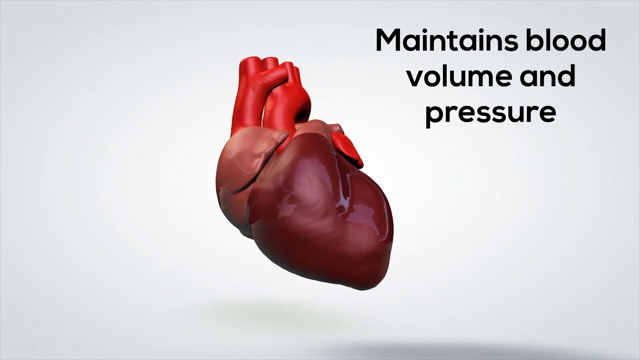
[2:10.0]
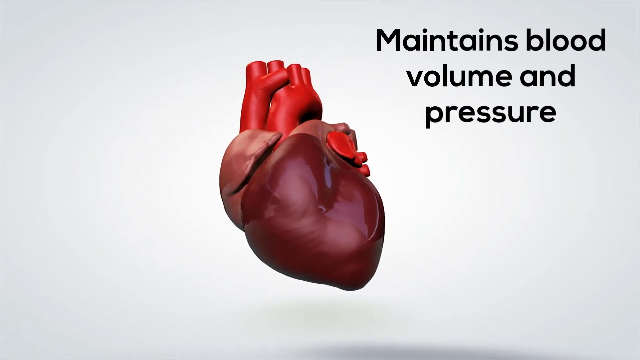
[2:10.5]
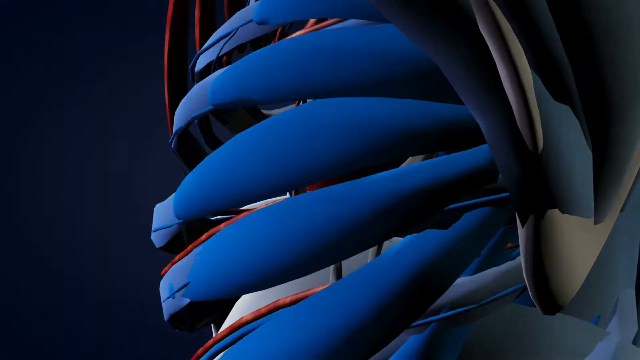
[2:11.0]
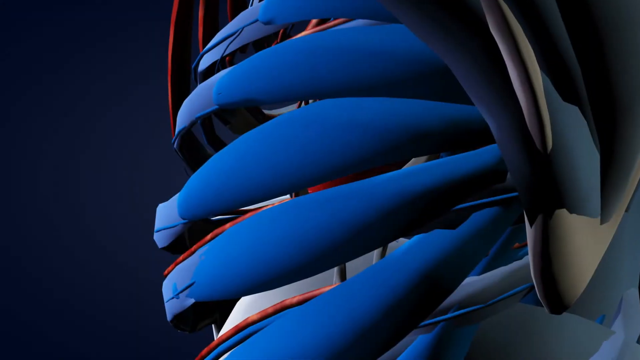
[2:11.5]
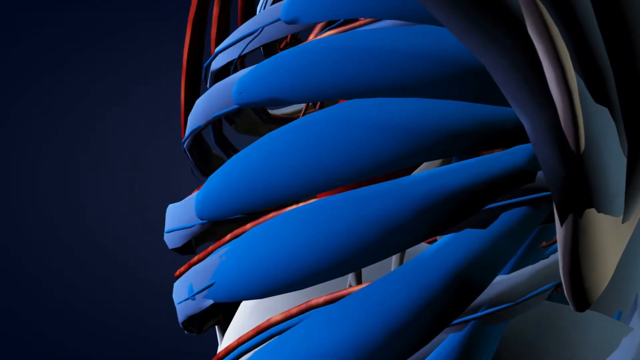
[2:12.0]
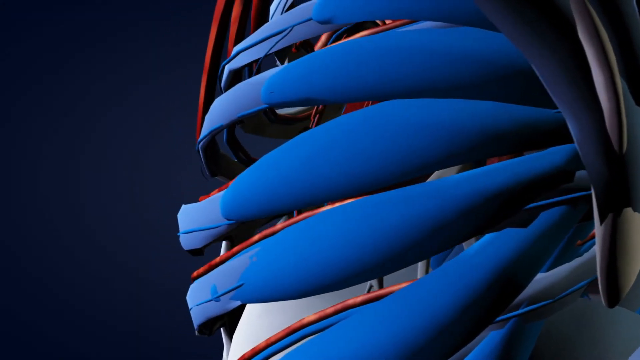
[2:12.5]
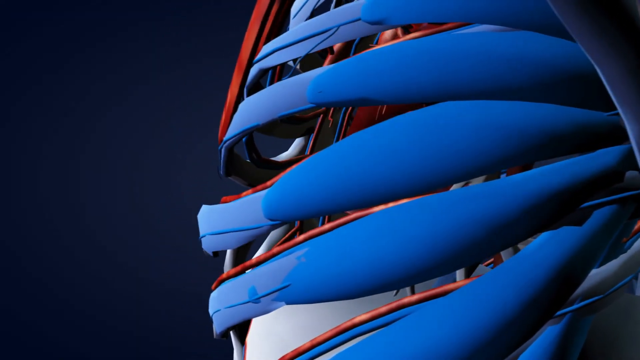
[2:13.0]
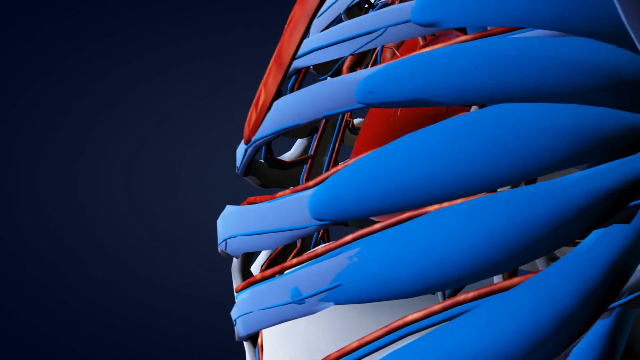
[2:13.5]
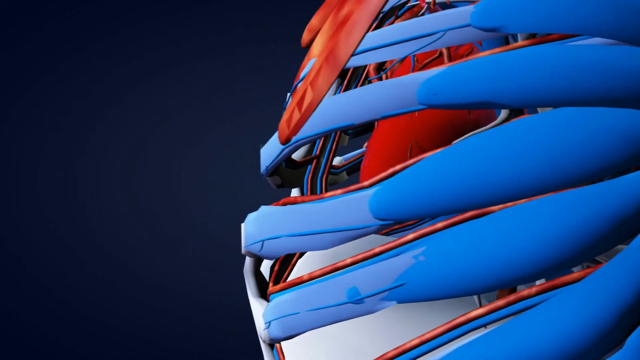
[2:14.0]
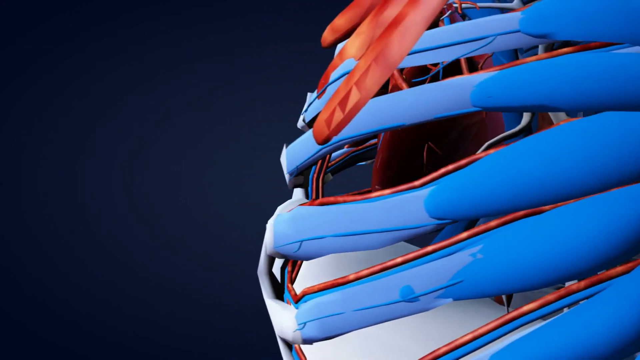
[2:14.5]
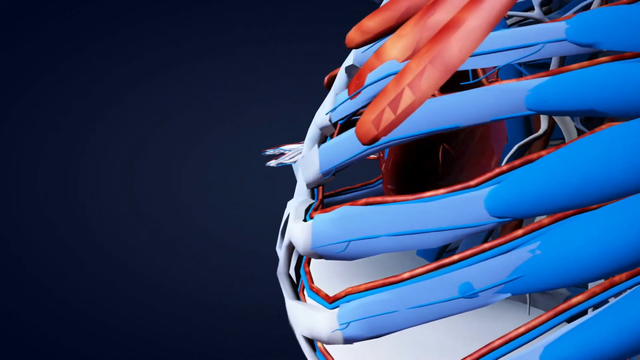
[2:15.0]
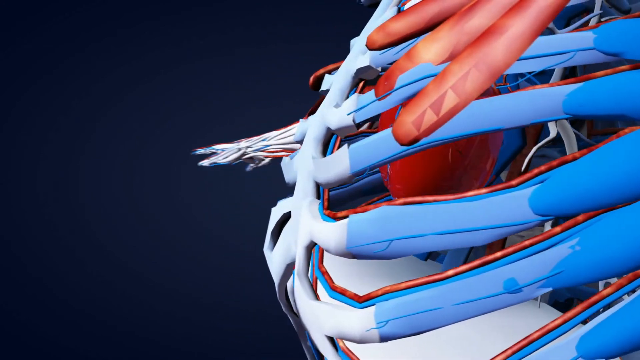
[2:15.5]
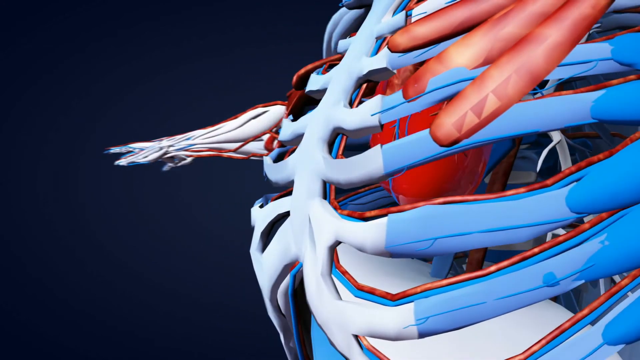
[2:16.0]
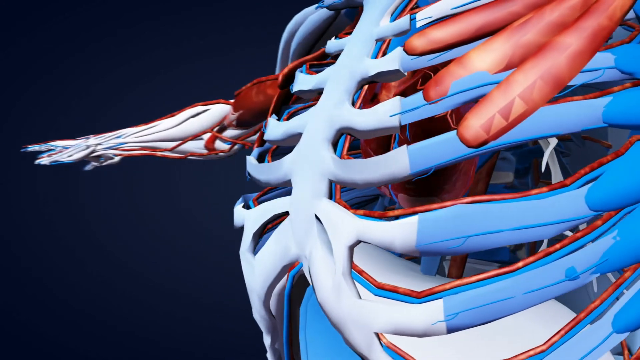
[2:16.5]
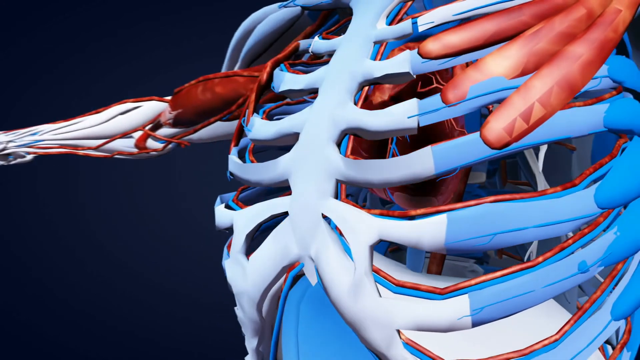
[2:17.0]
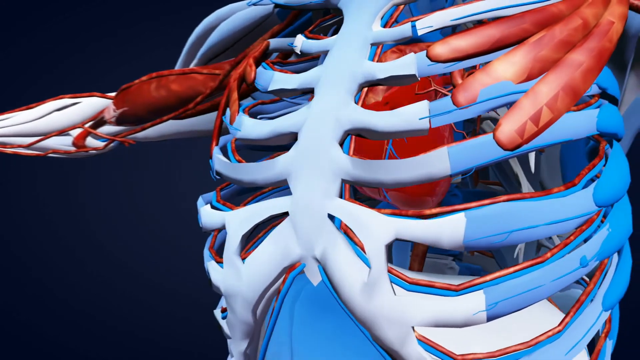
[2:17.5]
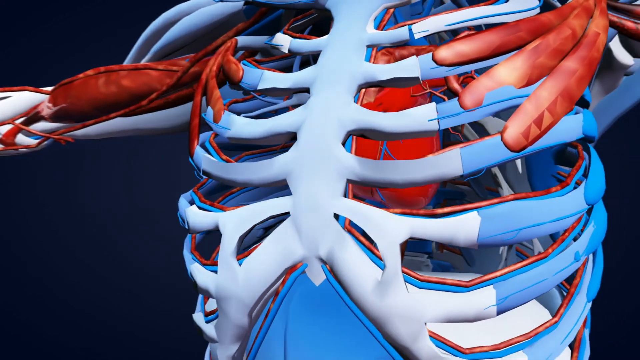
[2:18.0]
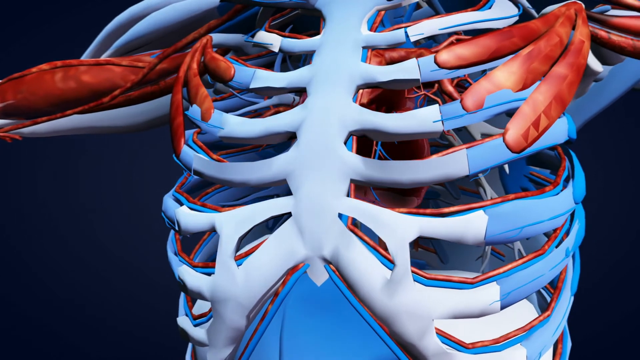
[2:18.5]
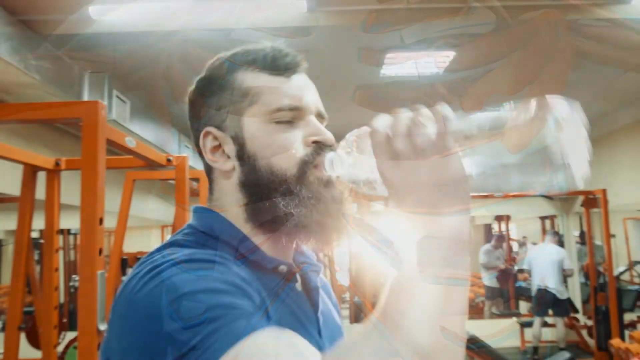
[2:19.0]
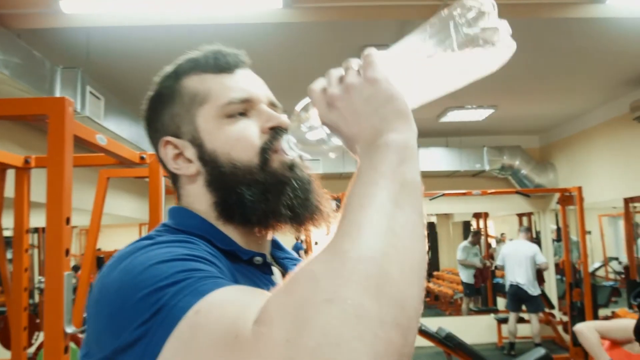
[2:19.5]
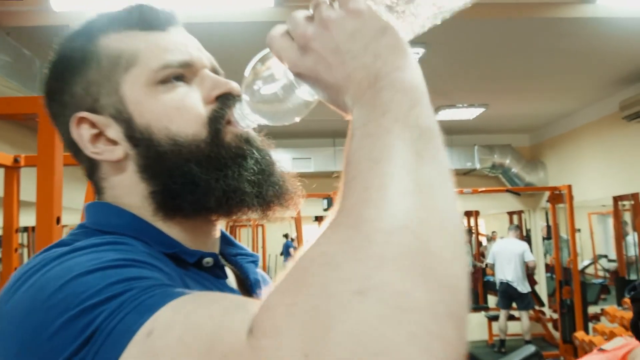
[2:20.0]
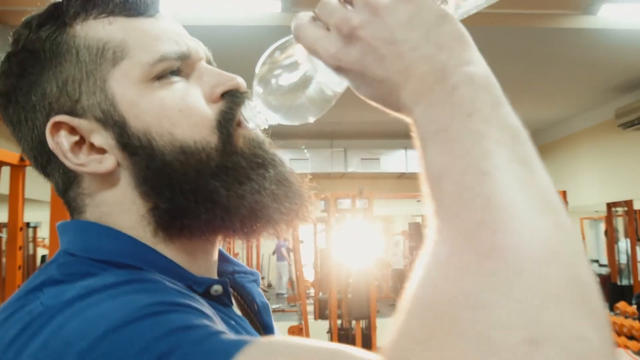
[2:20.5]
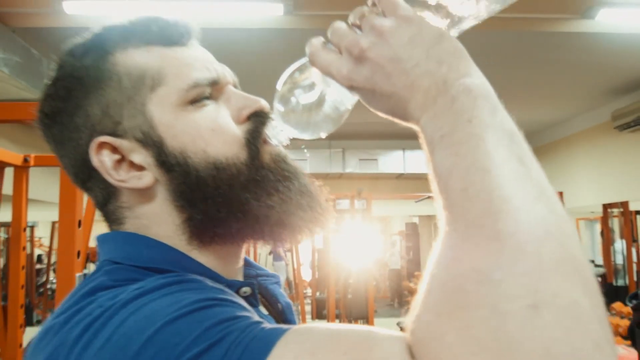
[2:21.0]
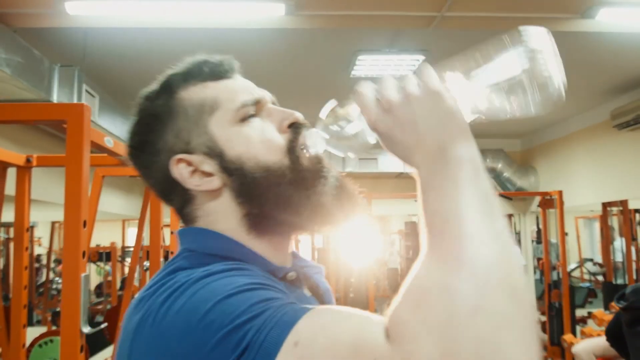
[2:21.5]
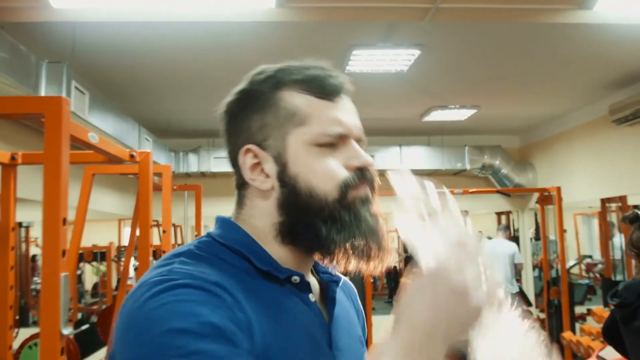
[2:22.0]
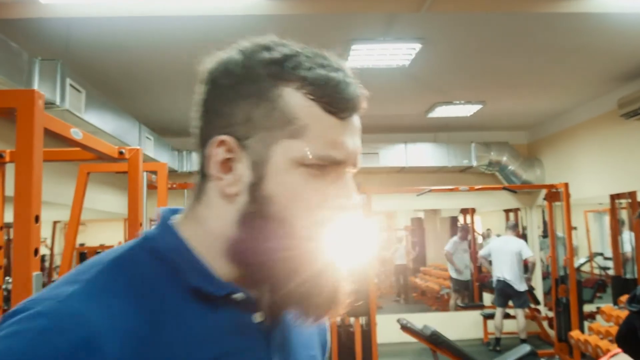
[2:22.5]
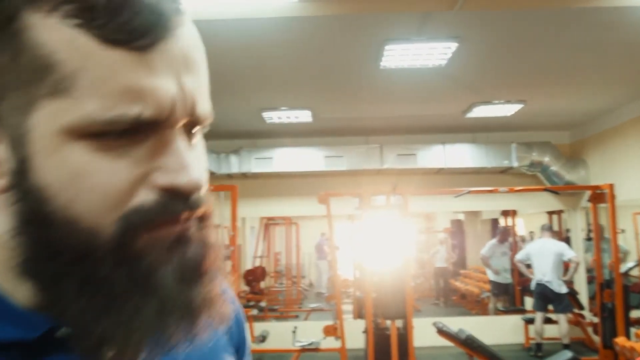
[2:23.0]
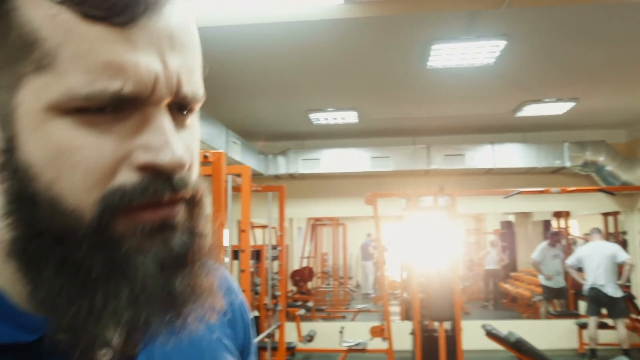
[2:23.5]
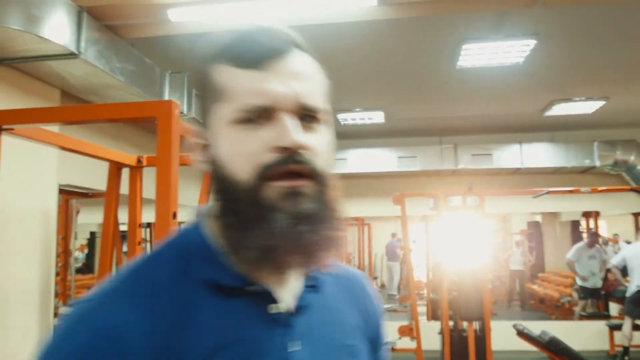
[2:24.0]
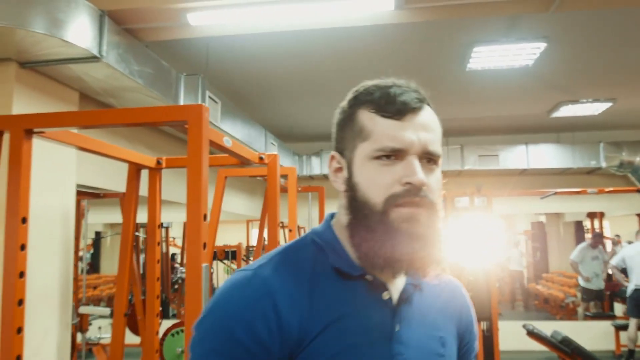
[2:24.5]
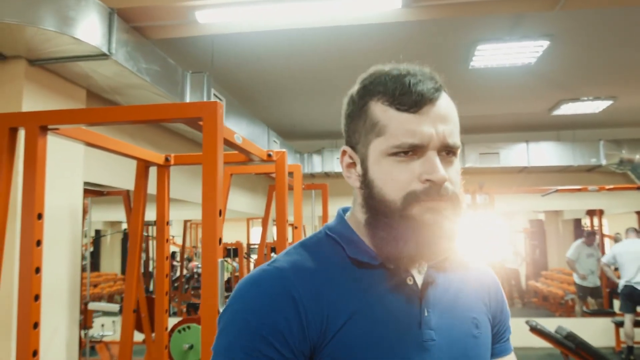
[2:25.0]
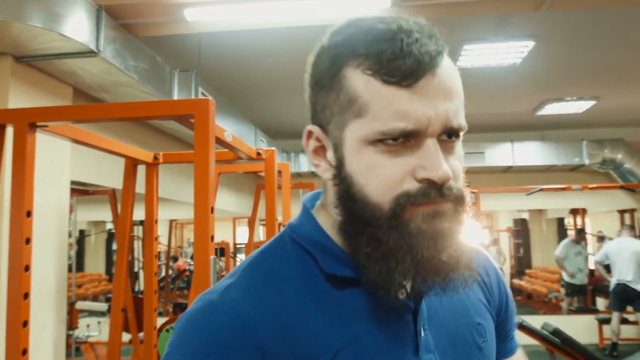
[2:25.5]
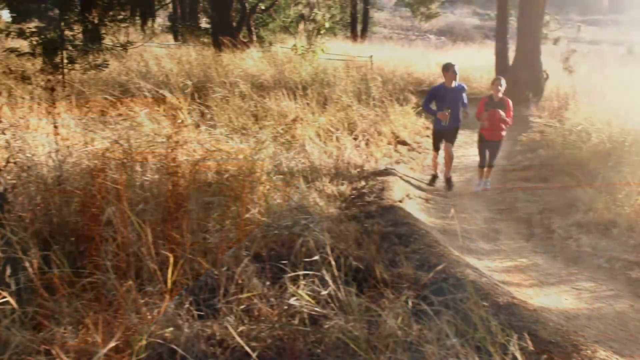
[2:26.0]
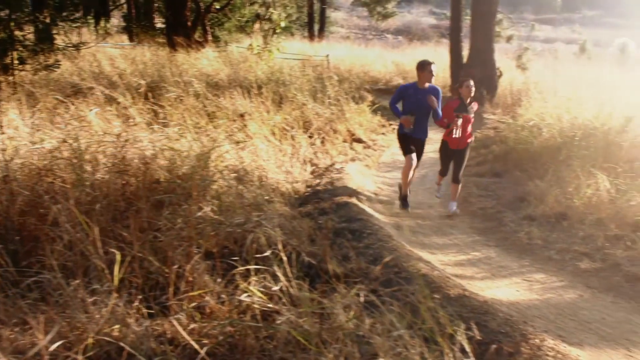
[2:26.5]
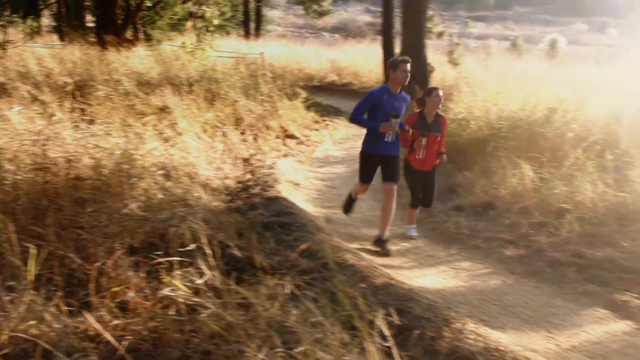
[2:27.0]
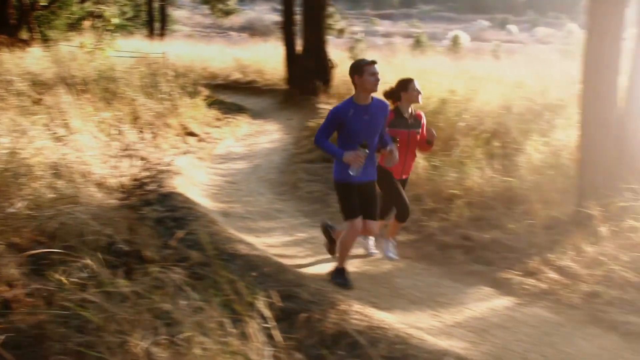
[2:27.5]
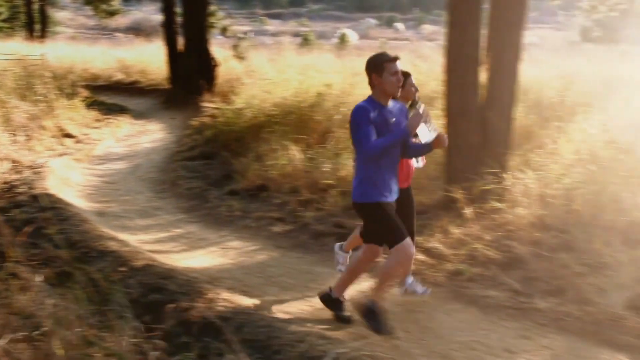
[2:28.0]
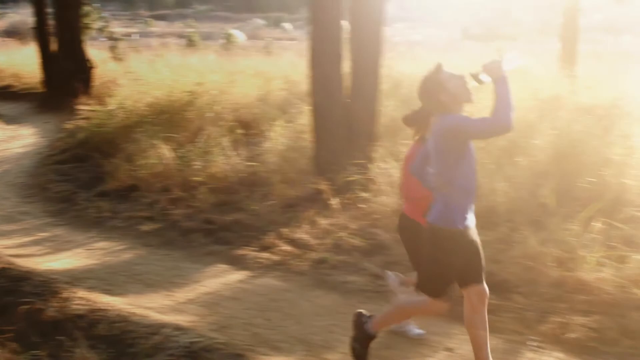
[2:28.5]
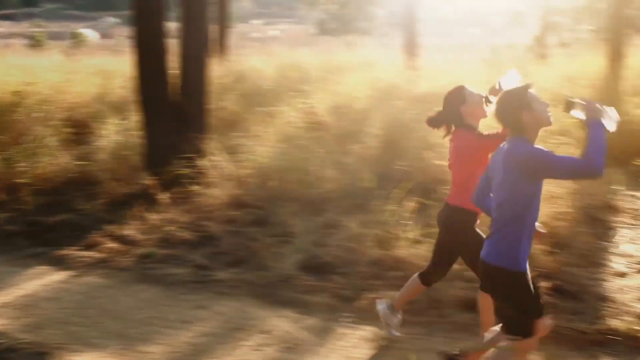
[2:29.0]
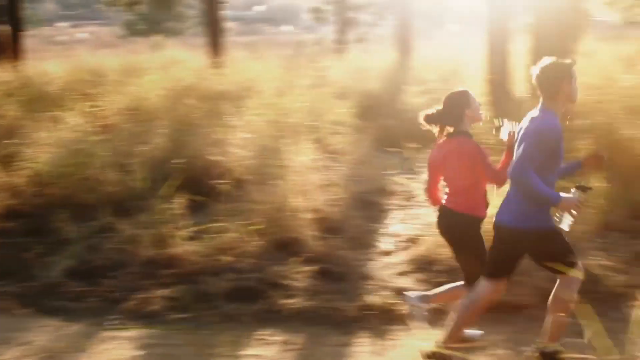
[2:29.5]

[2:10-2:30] The 3D heart with its veins and arteries rotates on the screen, and then a skeleton in blue and red appears, also going round and round. The video then moves to a man in a gym wearing a blue shirt, with a long beard, gulping down water from a bottle. Next, a man and a woman are jogging, apparently in a field or a park. Both hold water bottles and are dressed in tights, sneakers and T-shirts, and they drink water as they jog. The video then returns to the heart, which is turning around.